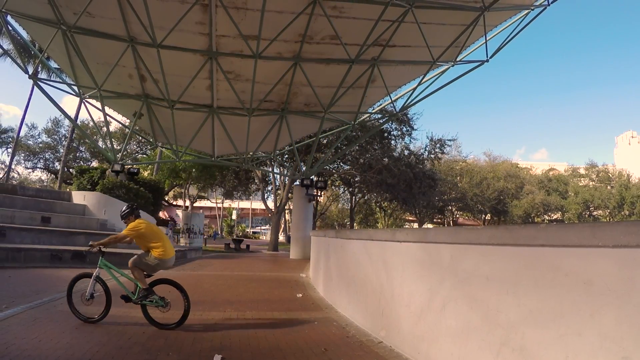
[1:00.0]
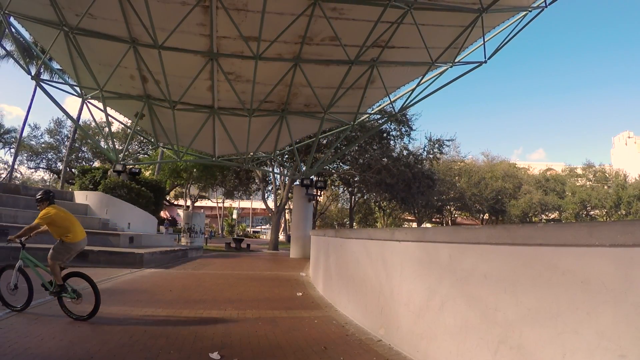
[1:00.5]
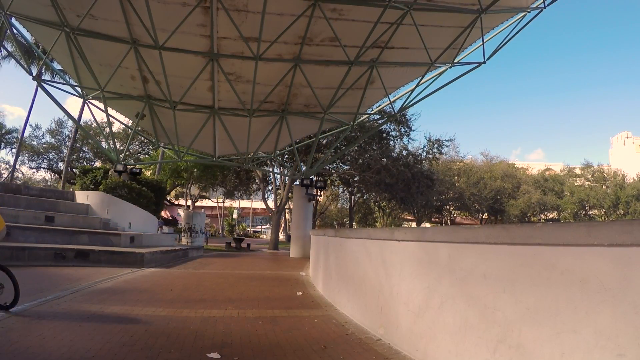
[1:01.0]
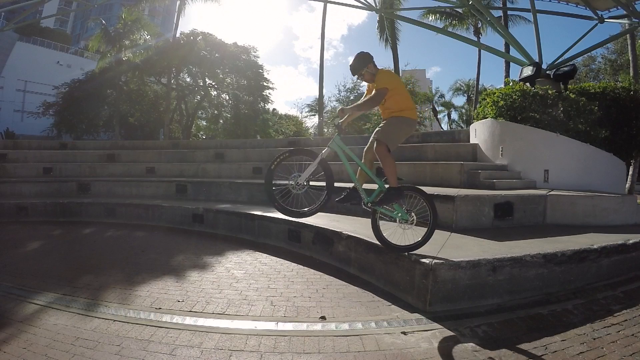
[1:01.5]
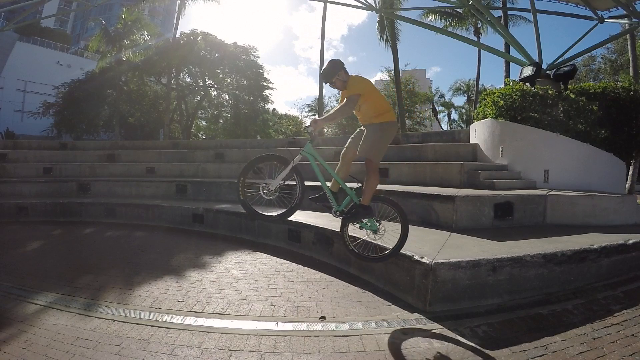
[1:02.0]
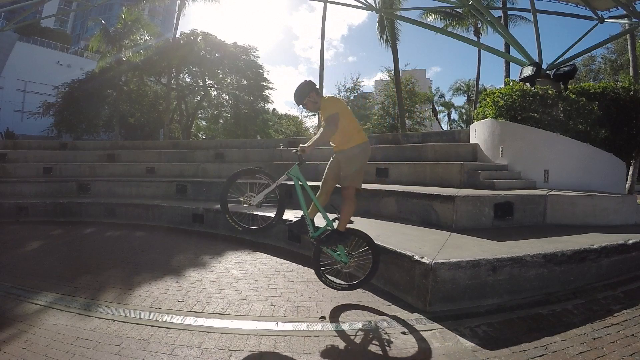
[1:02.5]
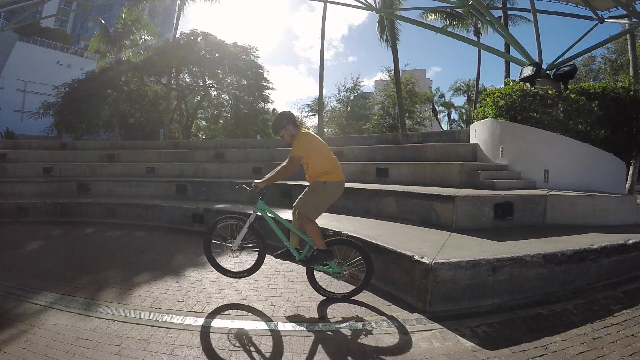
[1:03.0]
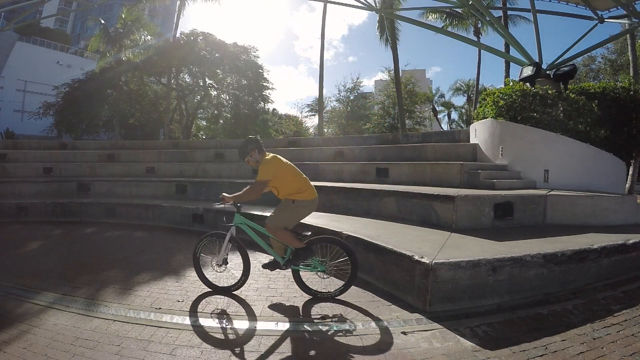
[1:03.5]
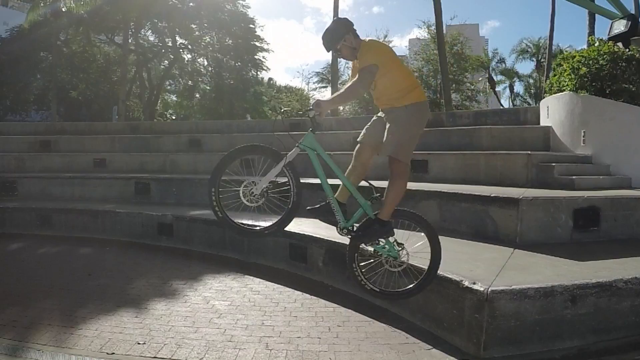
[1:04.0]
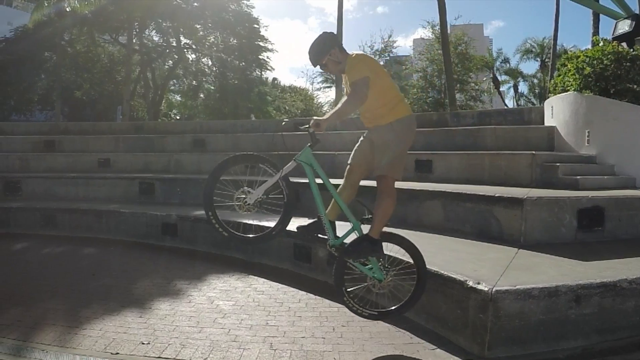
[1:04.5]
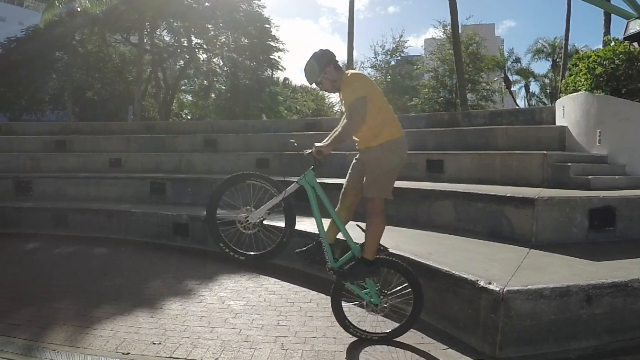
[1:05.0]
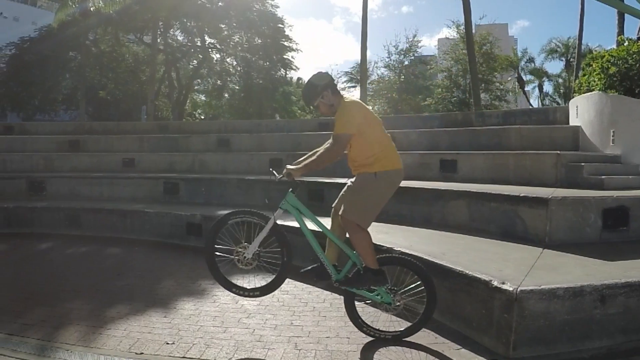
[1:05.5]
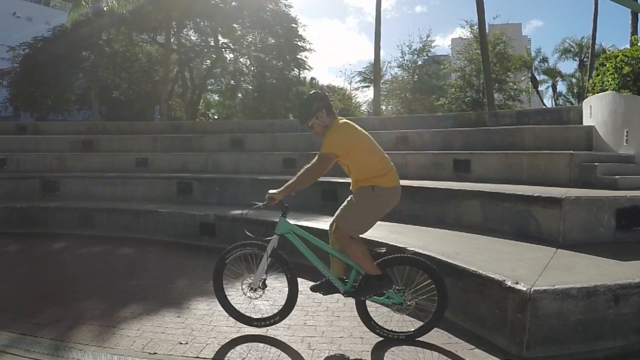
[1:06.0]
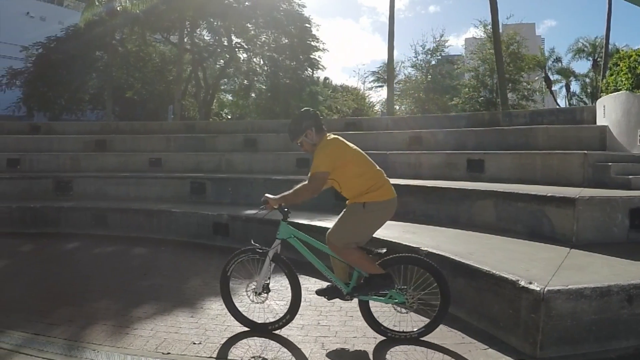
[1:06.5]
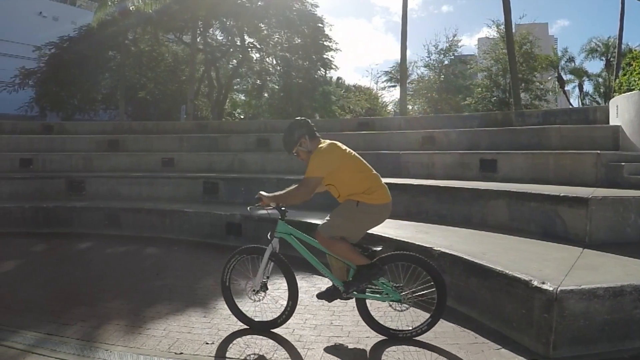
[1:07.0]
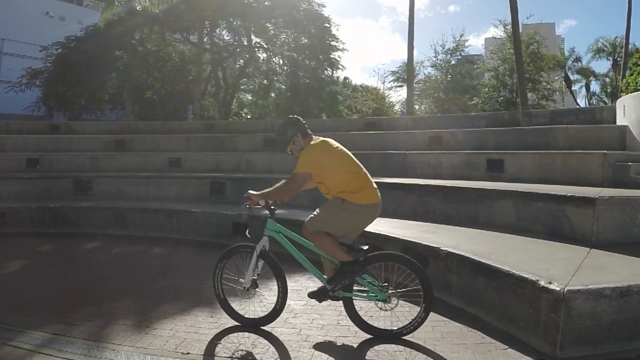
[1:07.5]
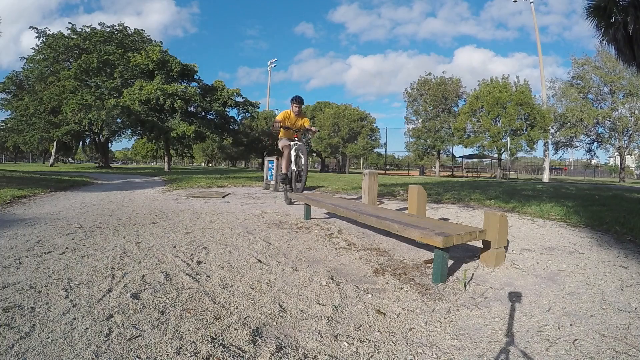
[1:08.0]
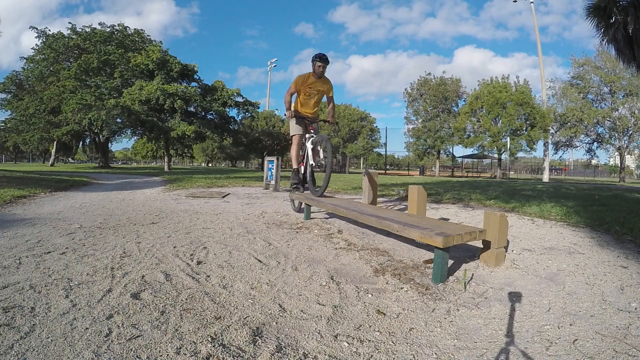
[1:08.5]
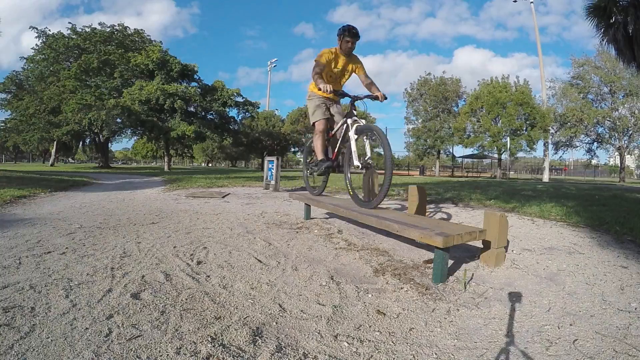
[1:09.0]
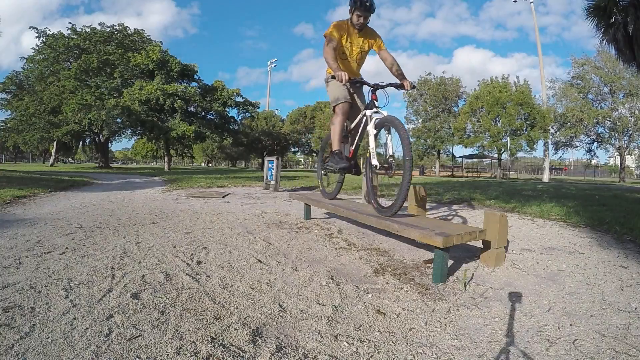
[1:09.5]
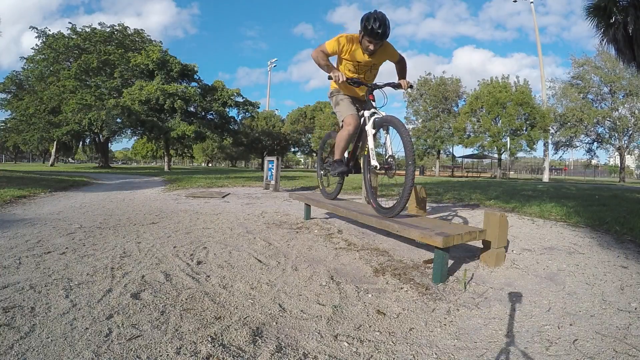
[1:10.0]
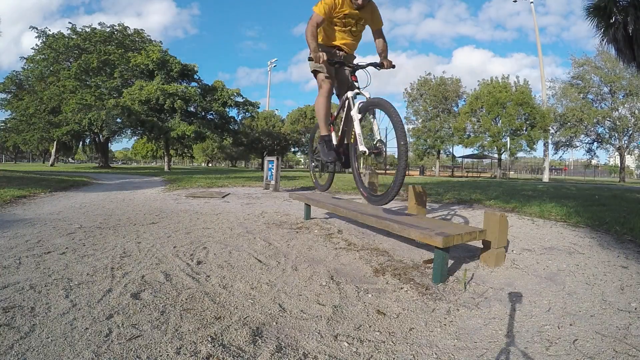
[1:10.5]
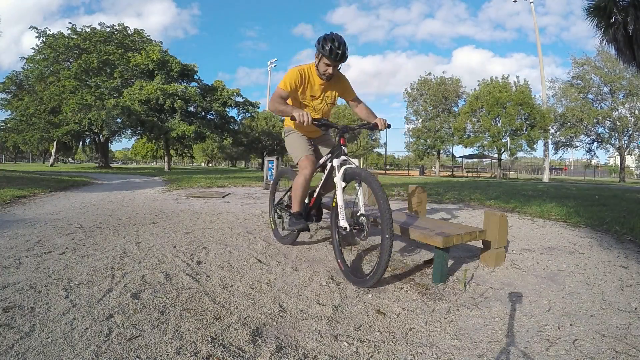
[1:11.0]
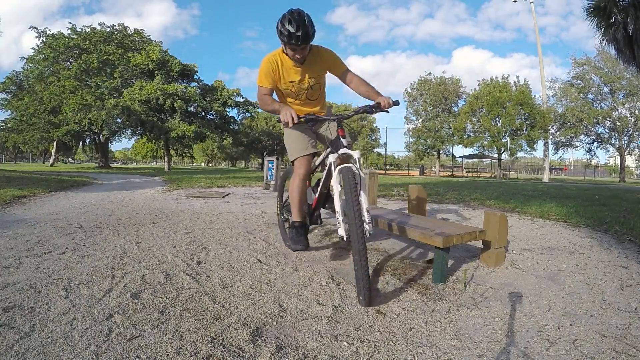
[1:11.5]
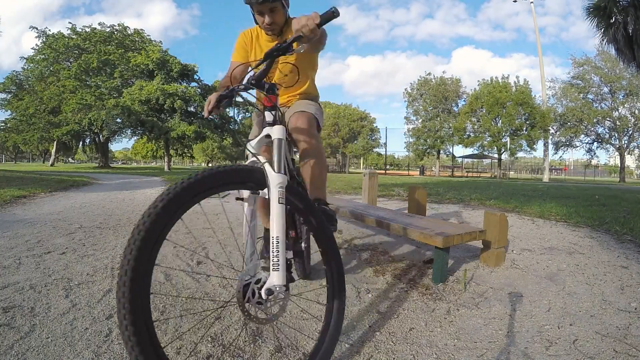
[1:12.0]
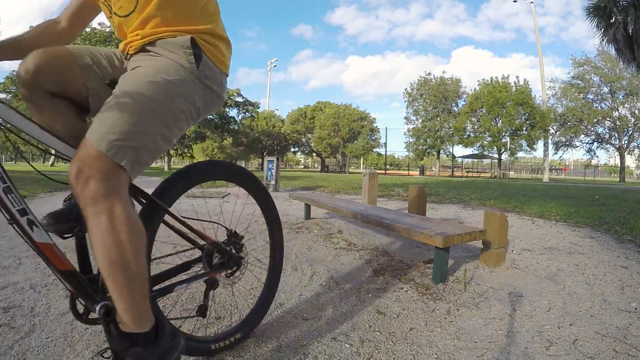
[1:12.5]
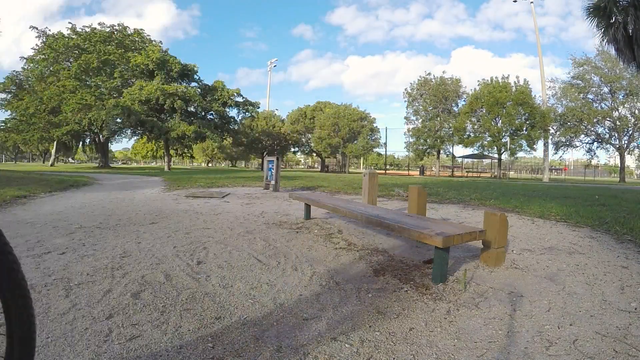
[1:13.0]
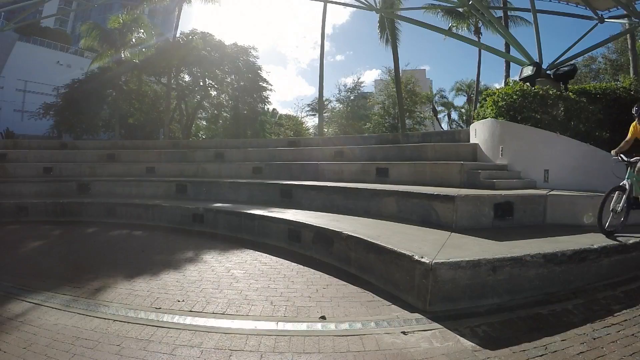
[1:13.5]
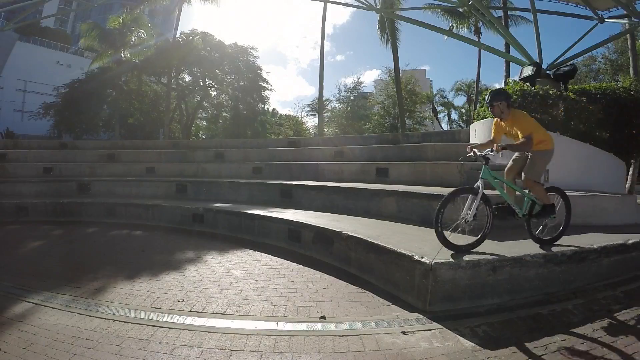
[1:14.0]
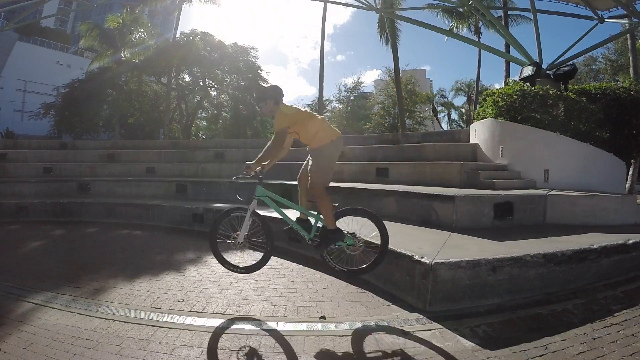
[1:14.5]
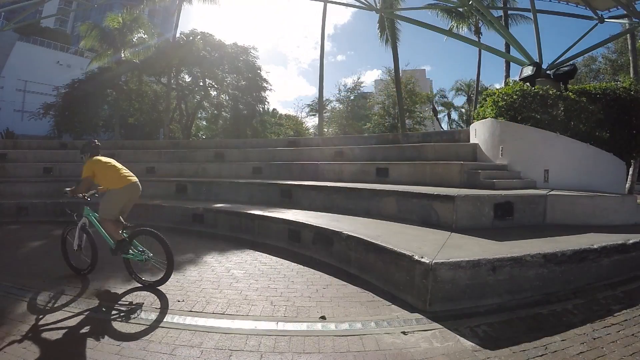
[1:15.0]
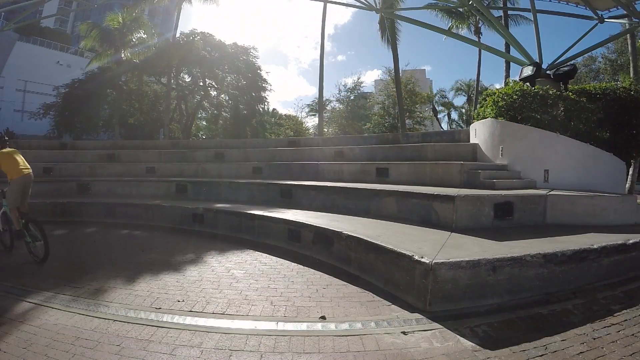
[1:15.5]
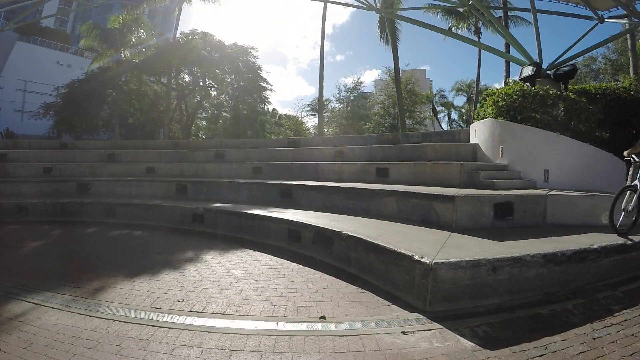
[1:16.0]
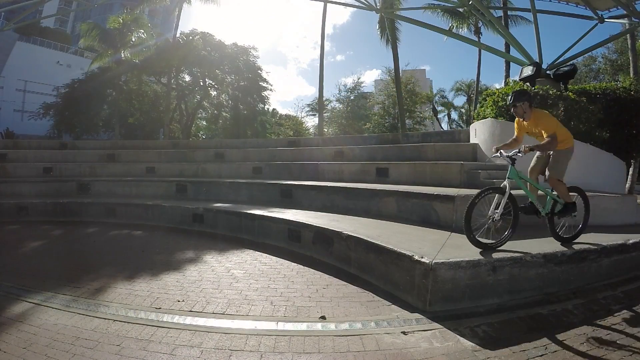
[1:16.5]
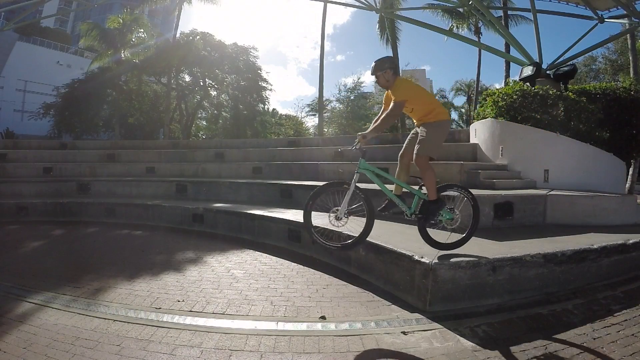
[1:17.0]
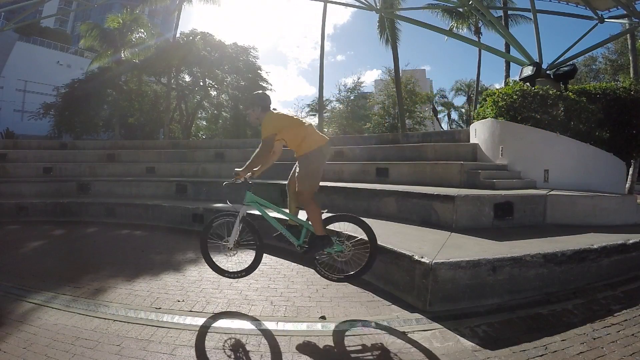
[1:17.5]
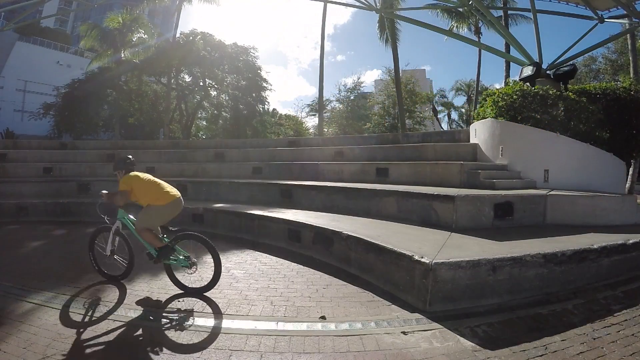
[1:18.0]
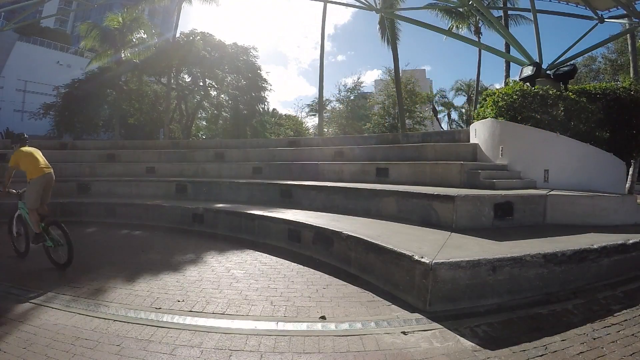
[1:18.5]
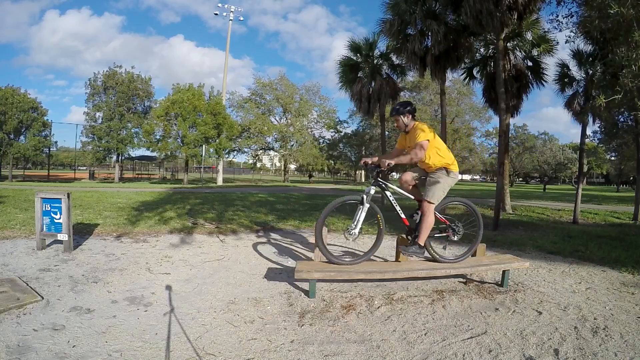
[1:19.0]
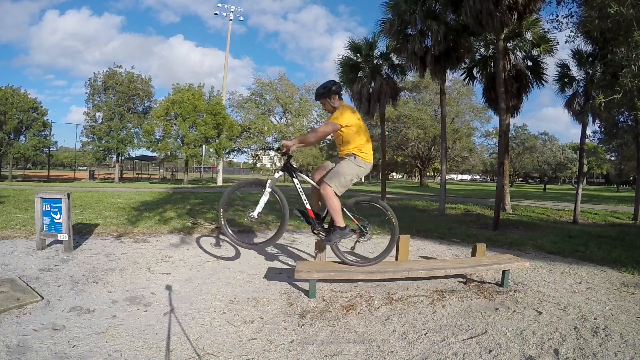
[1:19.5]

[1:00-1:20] A montage shows a man on a bicycle in various situations, mainly jumping off different obstacles and landing without incident. He jumps from outdoor steps and benches, one of which is a series of concrete benches, from which he jumps to a brick surface. In another shot he traverses an outdoor bench and lands below. In another, he stops on an outdoor wooden bench and, while on the bicycle, jumps to the ground onto a sandy surface without incident.